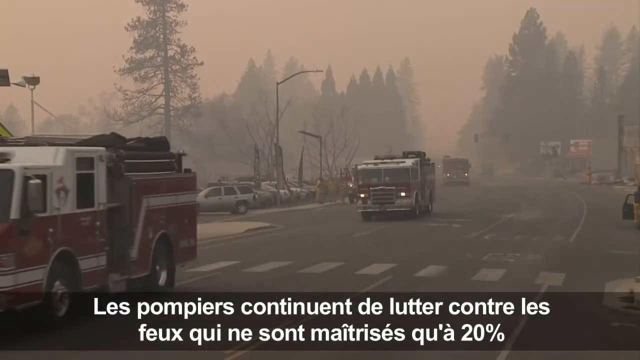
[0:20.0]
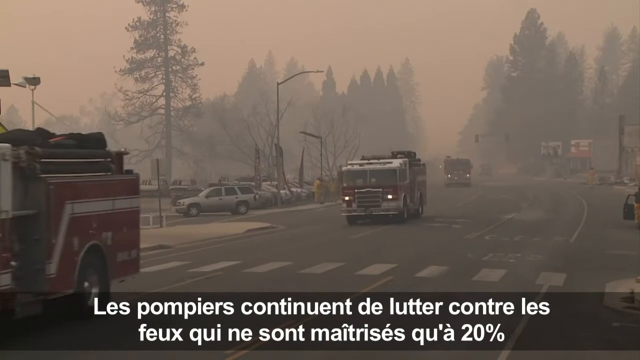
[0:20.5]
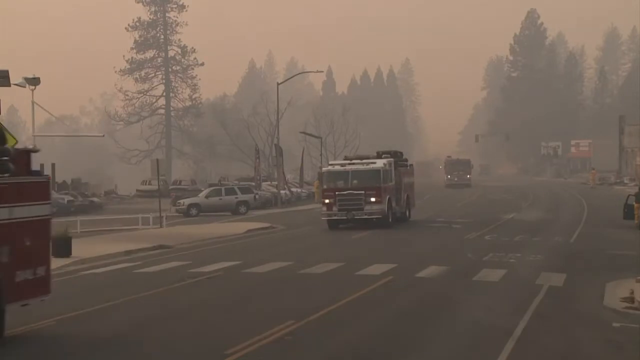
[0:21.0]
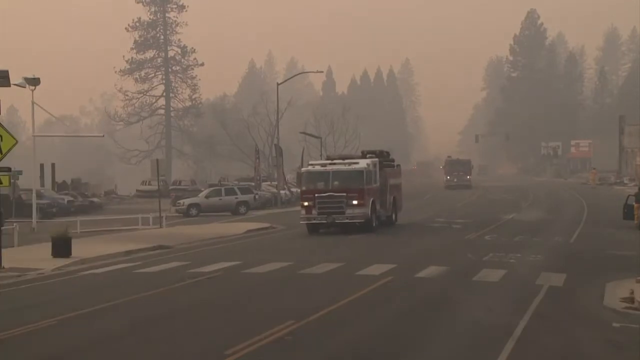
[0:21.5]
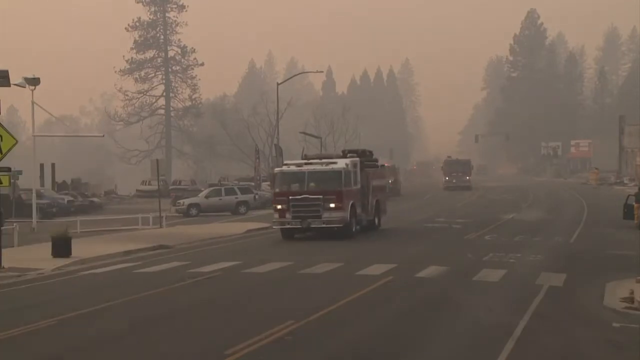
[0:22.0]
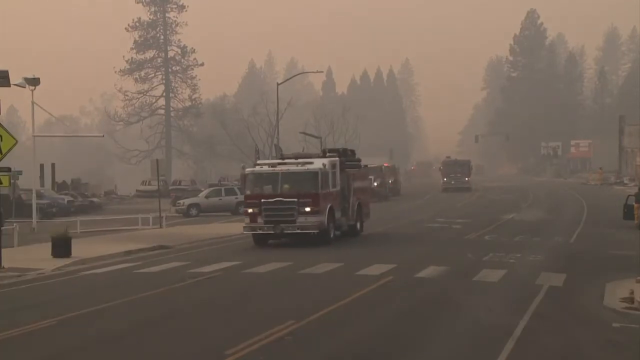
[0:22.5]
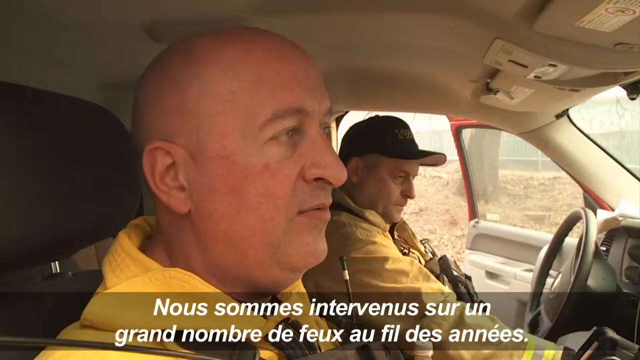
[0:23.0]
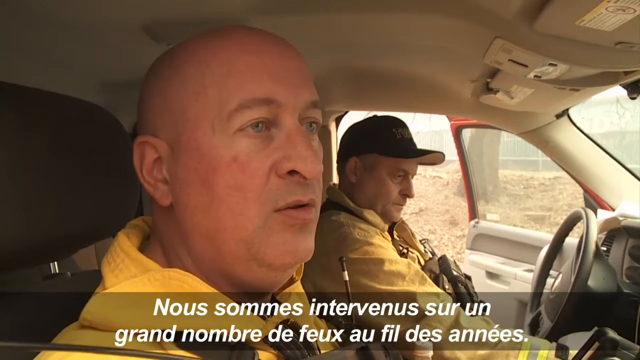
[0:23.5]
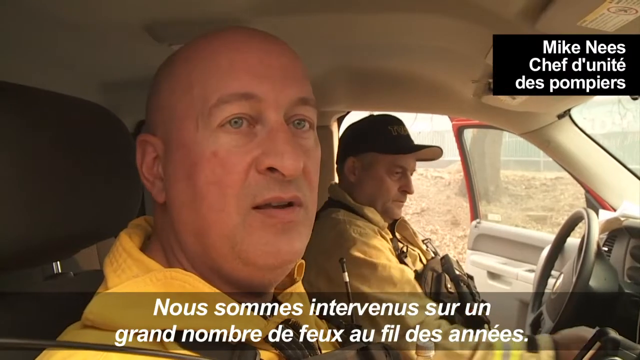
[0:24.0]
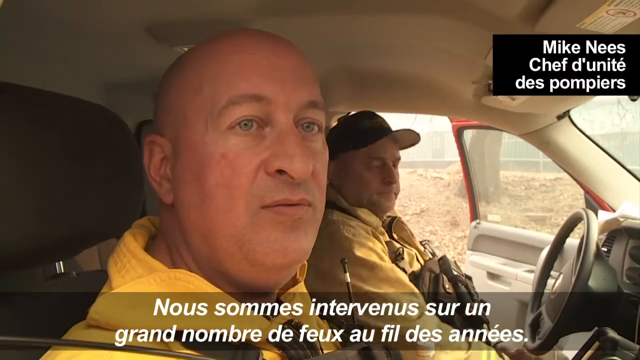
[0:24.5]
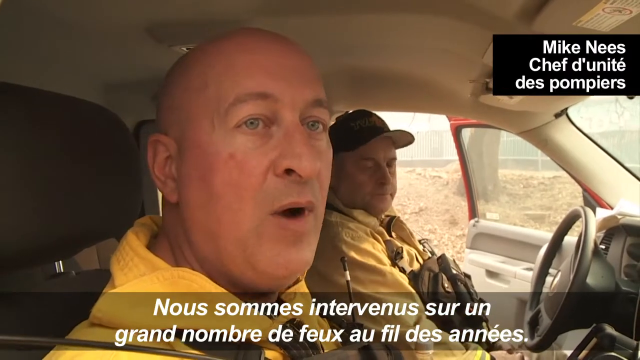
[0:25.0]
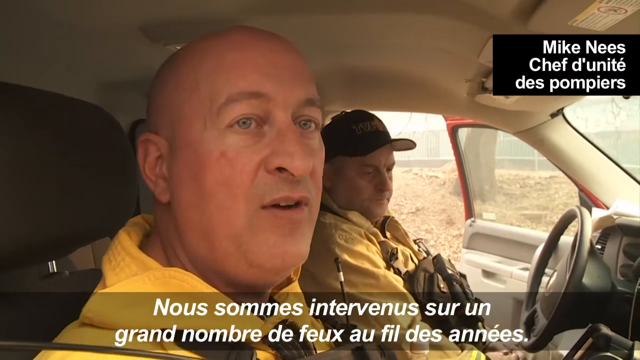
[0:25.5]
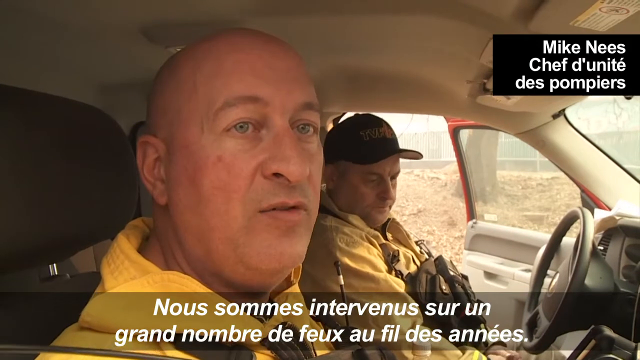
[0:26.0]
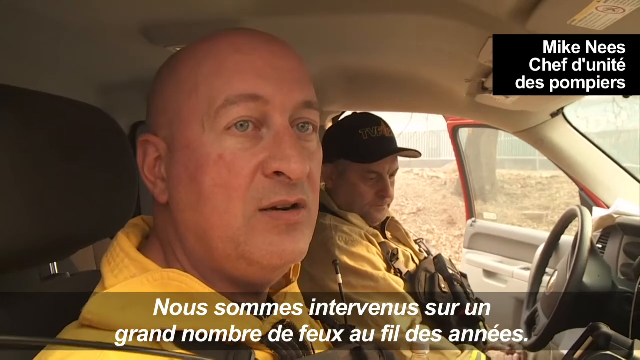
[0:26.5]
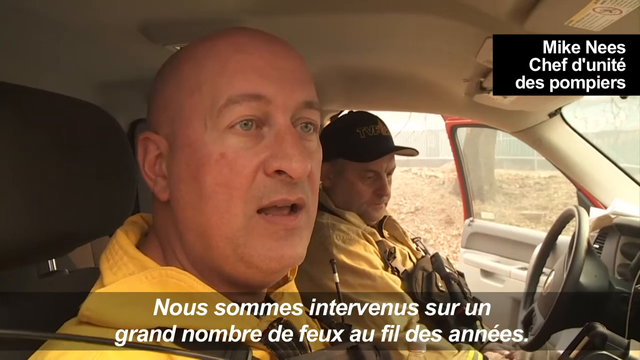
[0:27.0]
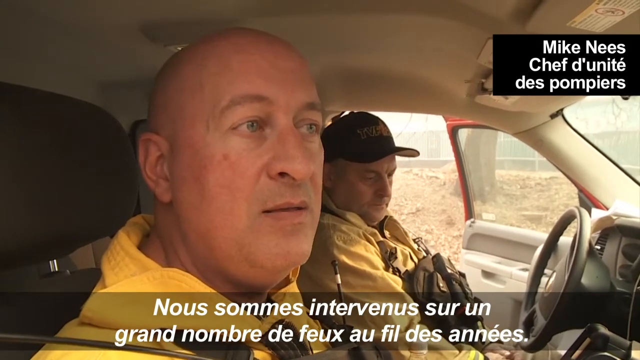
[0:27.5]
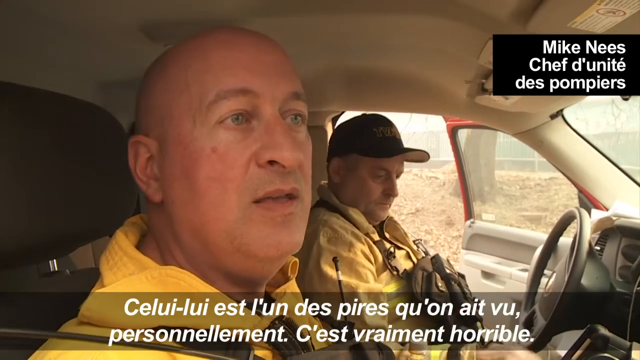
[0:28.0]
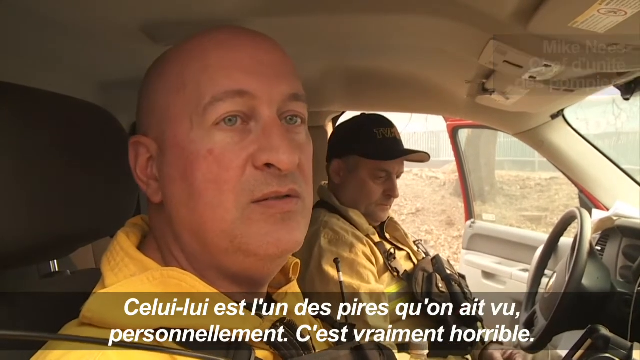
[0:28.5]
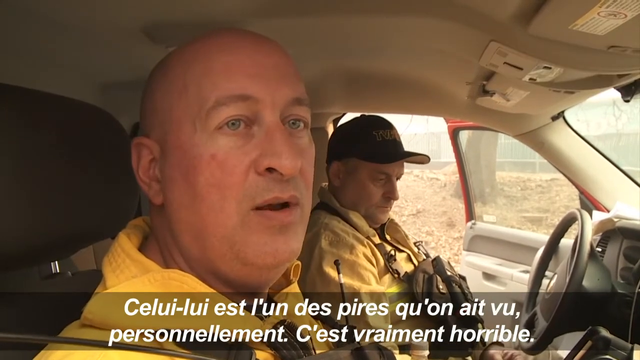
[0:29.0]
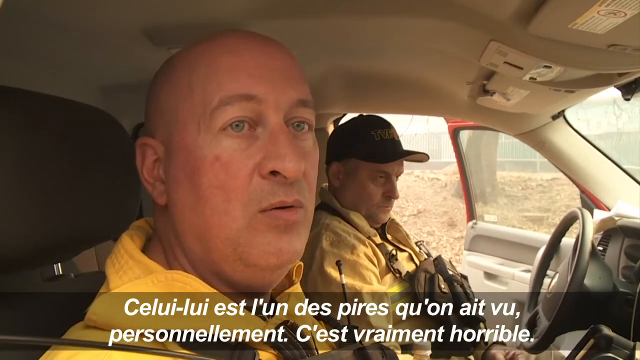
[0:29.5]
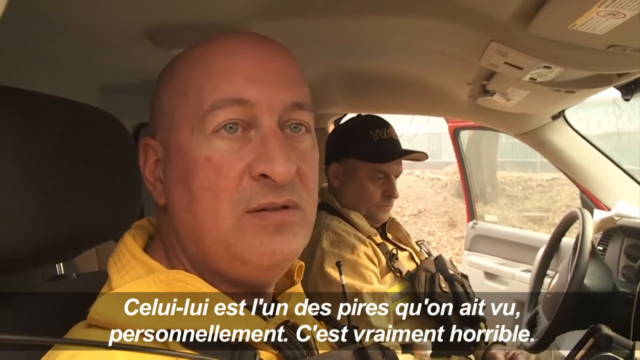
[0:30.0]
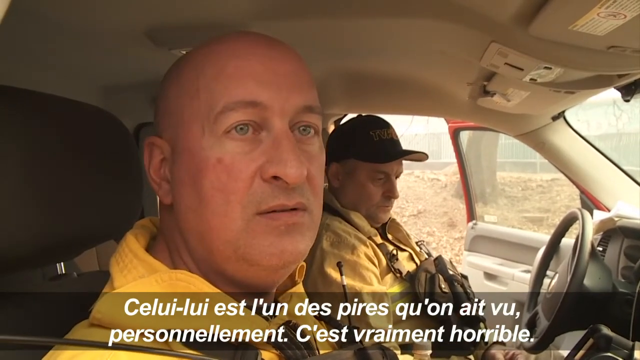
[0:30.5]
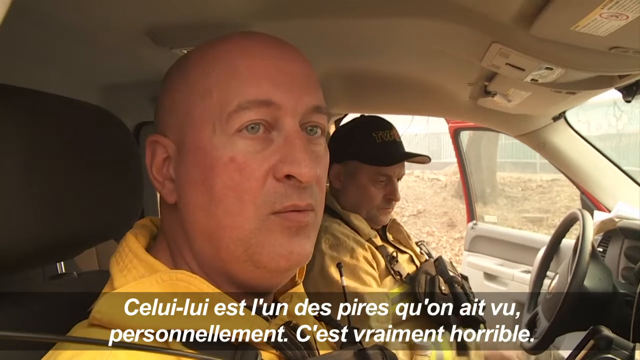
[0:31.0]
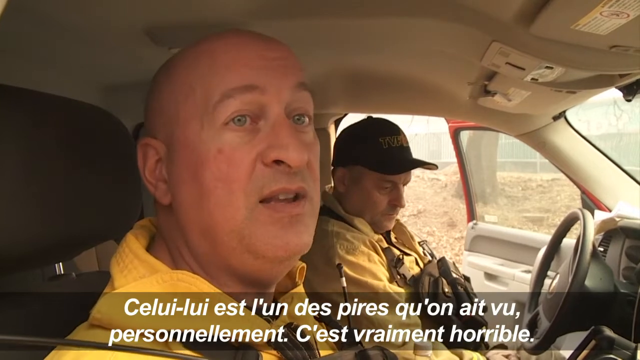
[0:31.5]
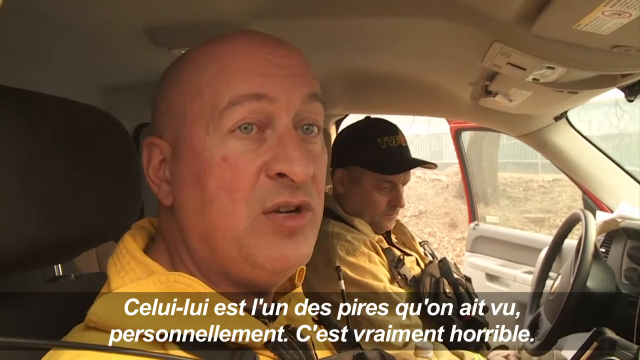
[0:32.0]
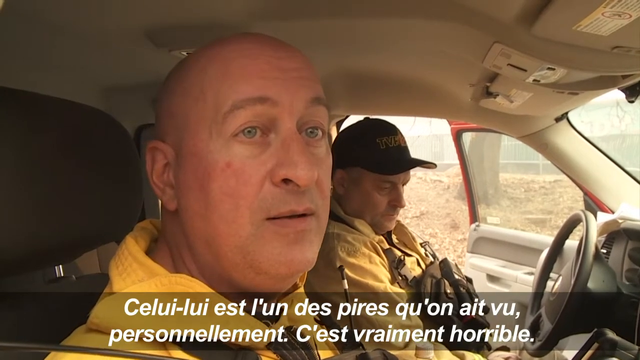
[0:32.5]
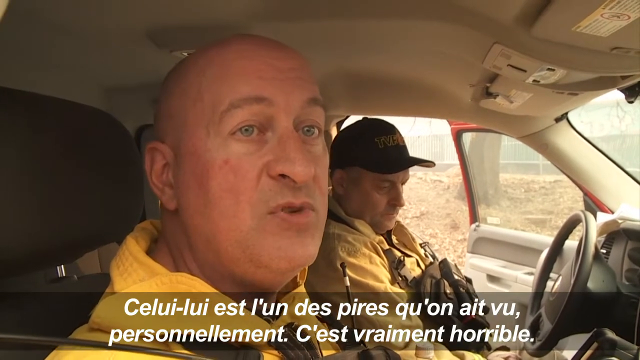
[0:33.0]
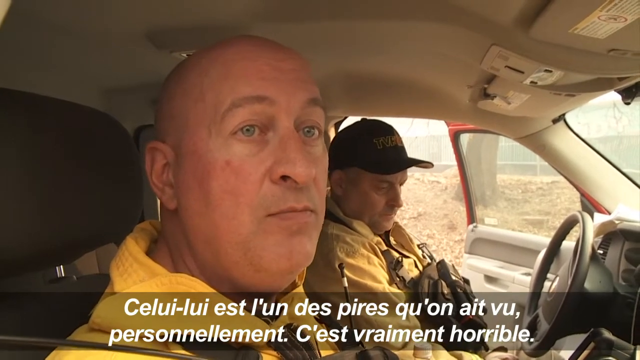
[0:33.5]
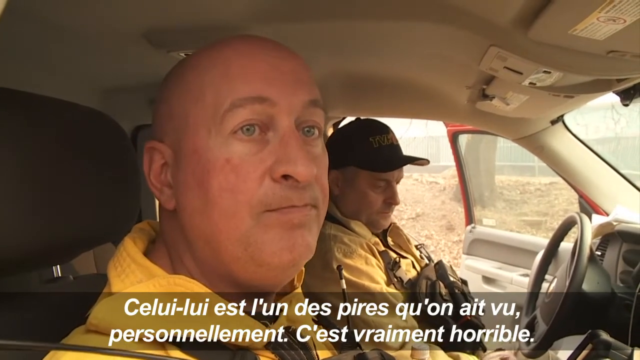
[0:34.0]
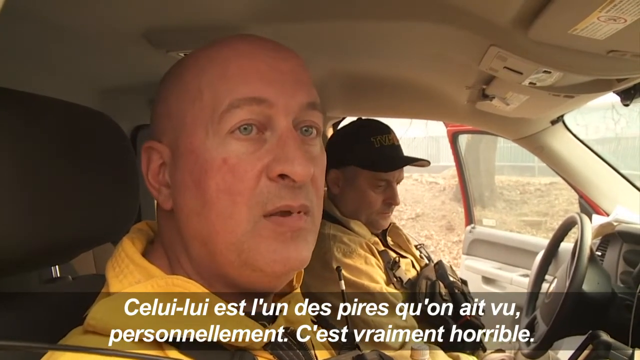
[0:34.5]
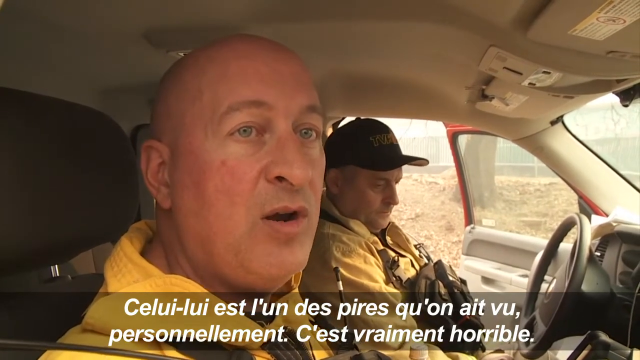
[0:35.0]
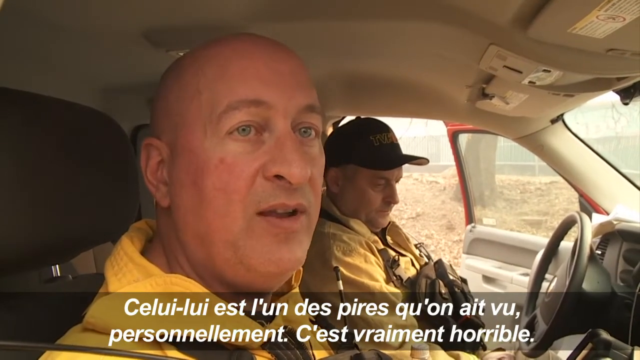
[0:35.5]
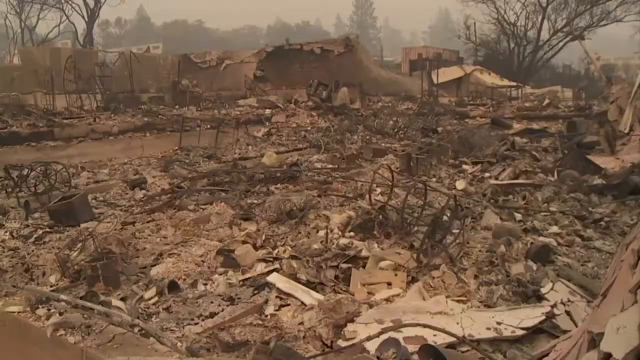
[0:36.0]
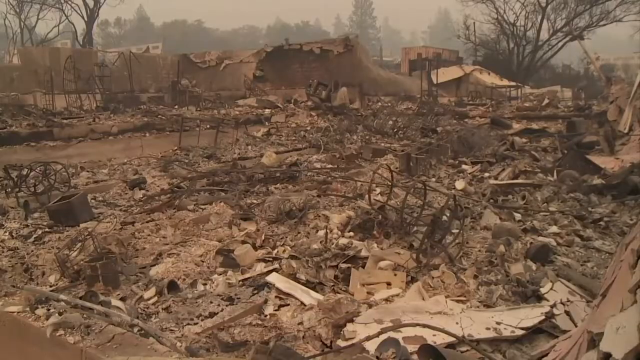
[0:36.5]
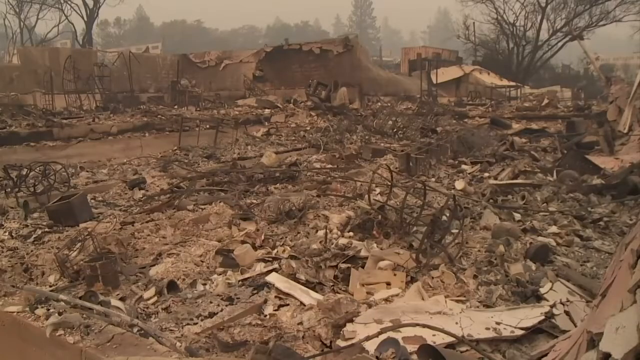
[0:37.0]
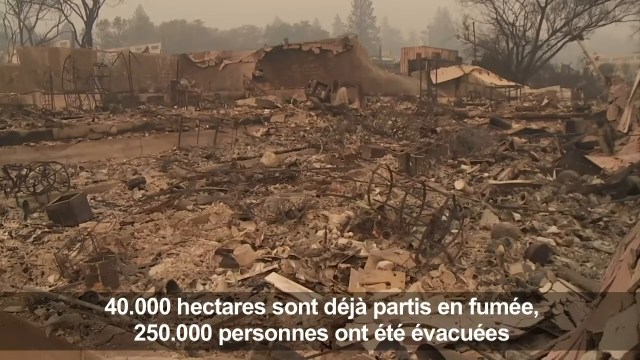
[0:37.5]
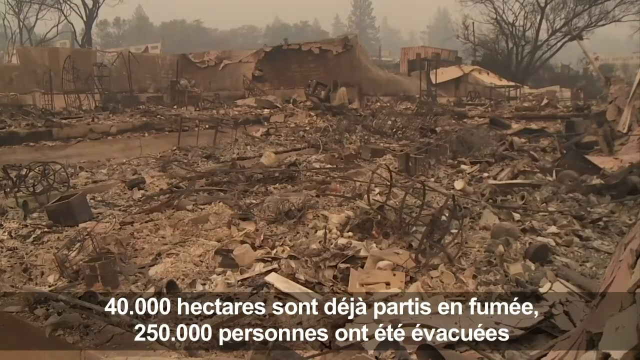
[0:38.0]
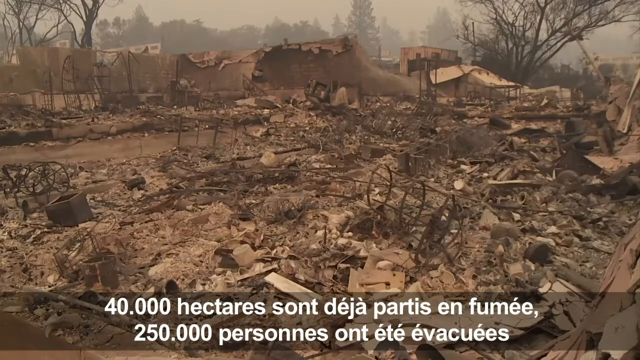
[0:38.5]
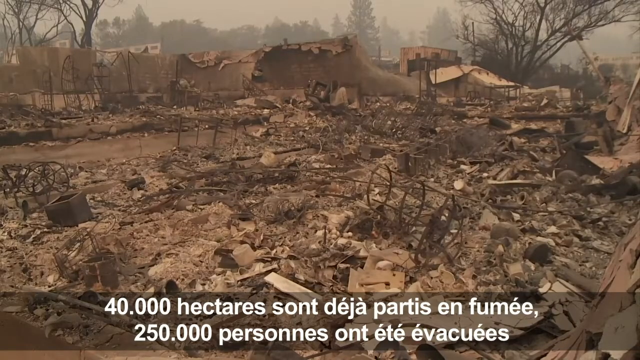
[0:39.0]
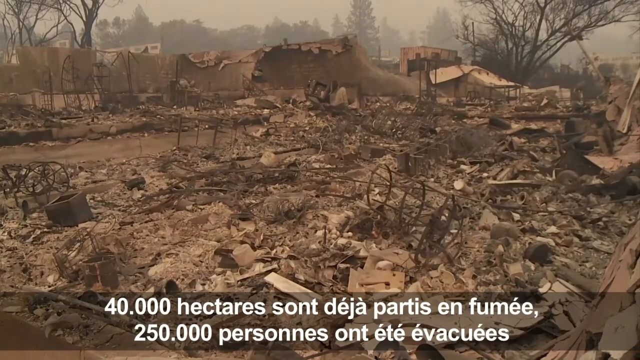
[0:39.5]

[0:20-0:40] In California, many things are destroyed, including cars, buses and lorries. It looks like a fire bomb, since everything there looks bombed and demolished. Many cars are visible, and the street lights have fallen and broken down into ashes. Everything is bent. Fire trucks that came for the rescue are shown, and two firemen talk to the cameraman. Not a single car has come out intact. Smoke is still on the road, and people are crying.